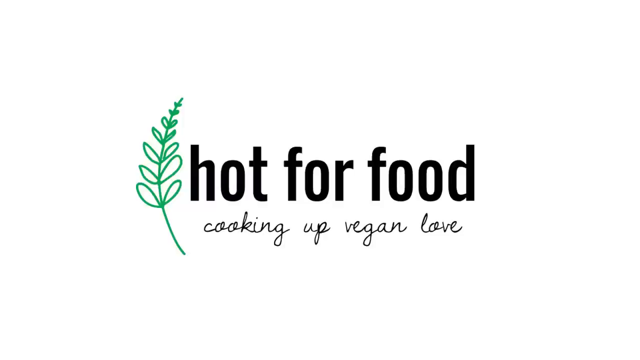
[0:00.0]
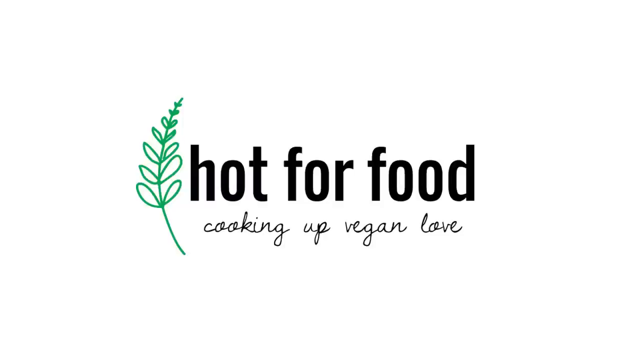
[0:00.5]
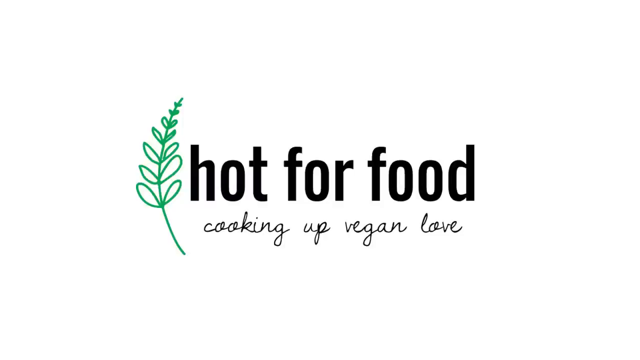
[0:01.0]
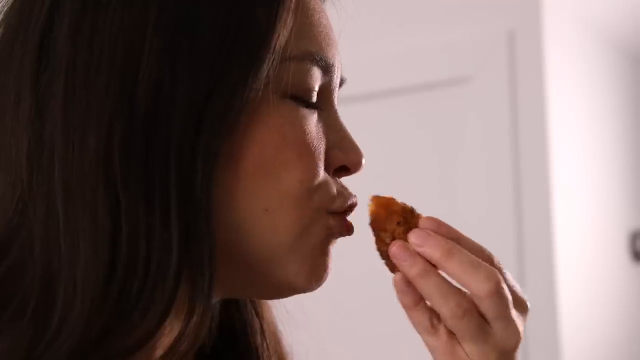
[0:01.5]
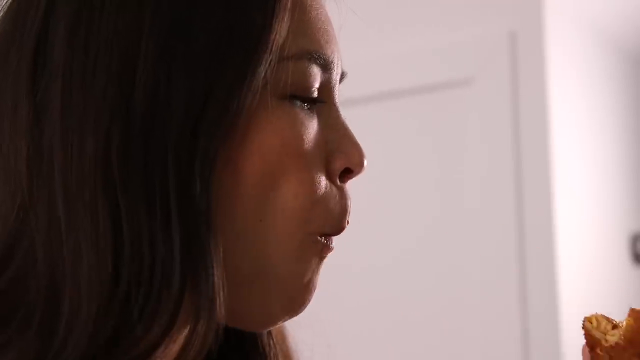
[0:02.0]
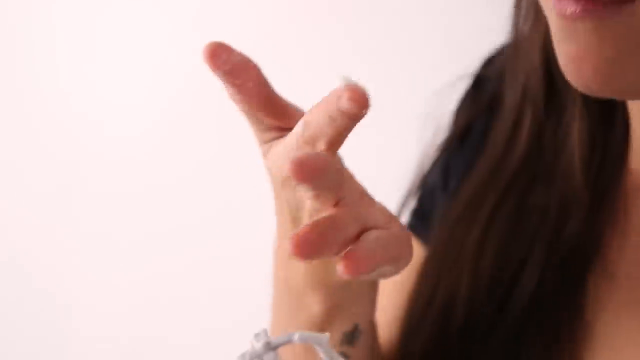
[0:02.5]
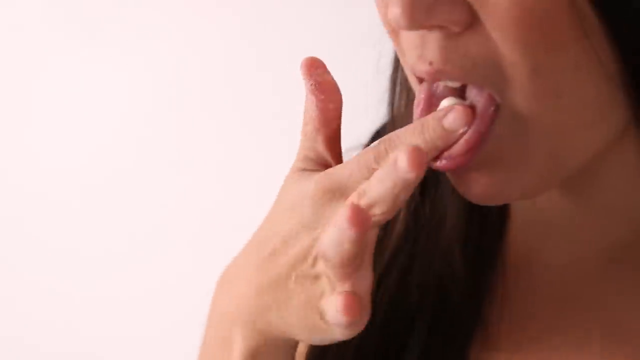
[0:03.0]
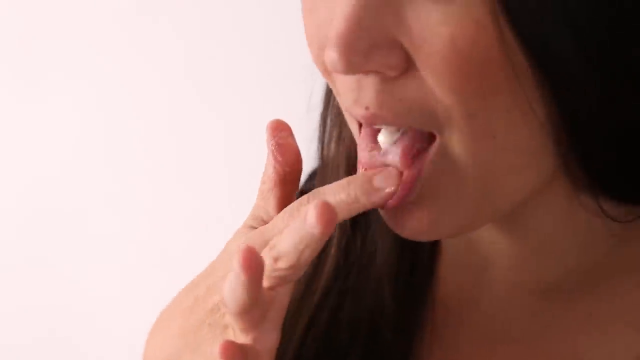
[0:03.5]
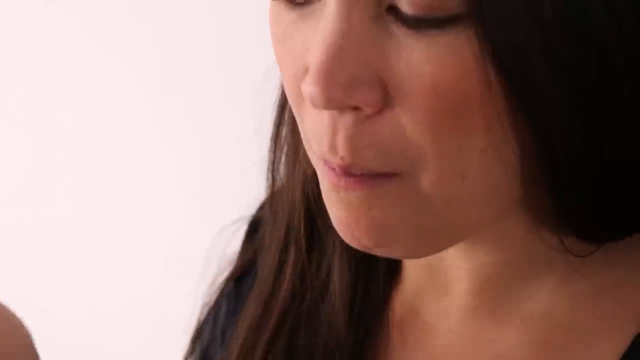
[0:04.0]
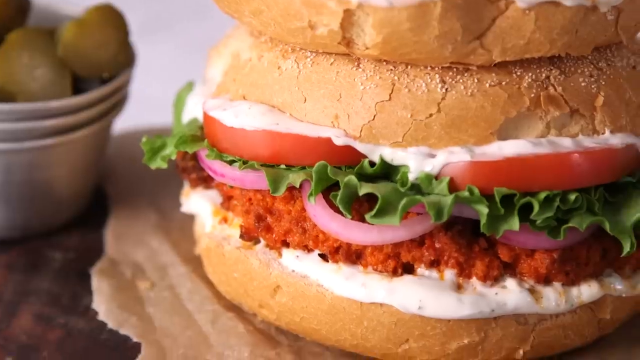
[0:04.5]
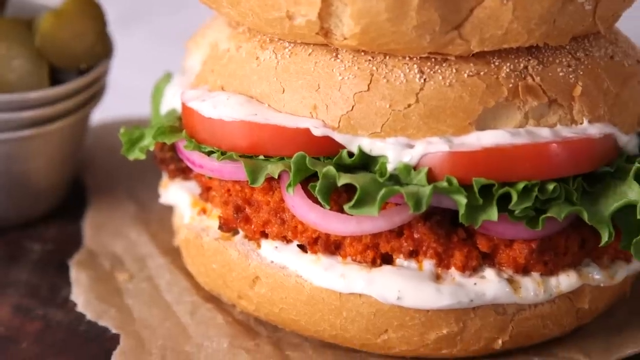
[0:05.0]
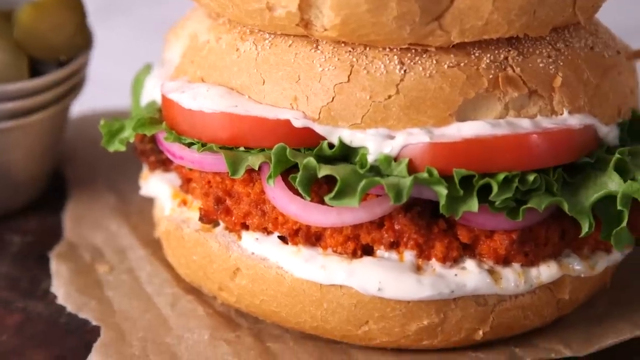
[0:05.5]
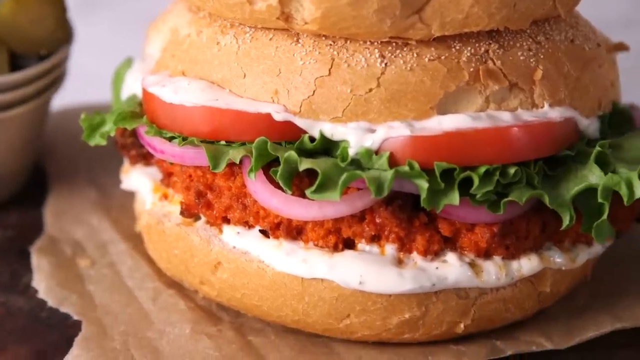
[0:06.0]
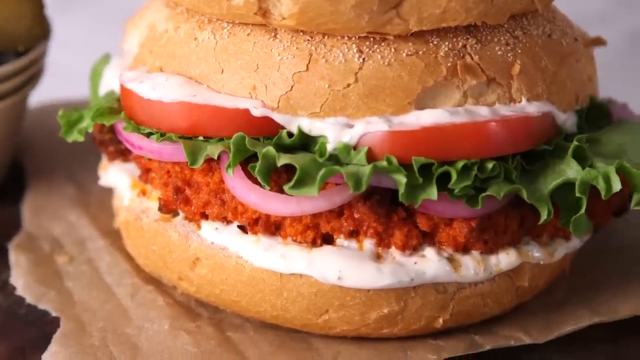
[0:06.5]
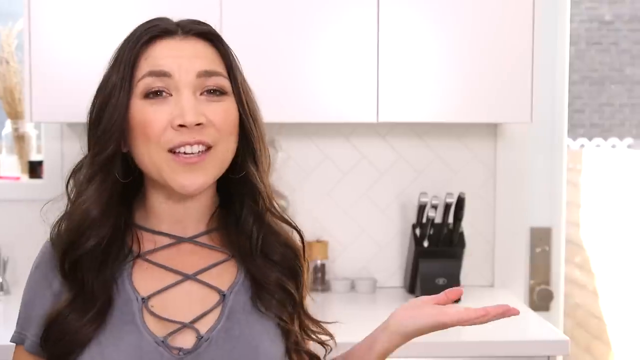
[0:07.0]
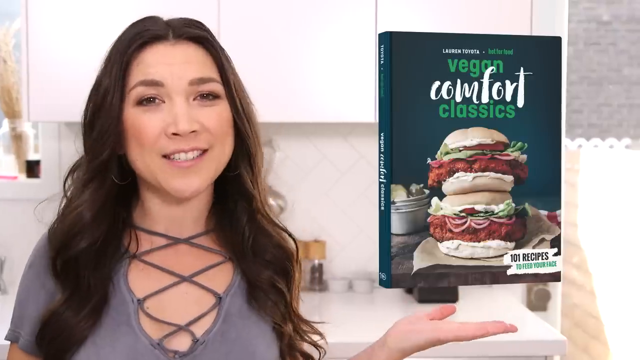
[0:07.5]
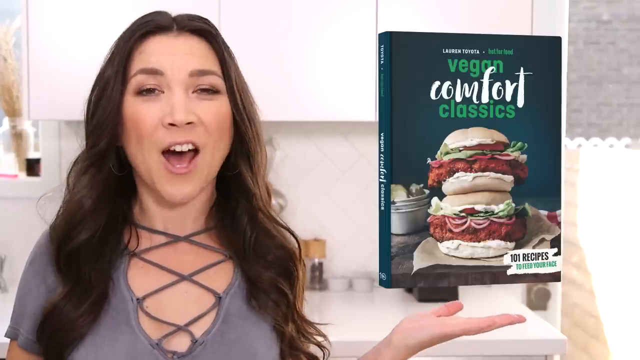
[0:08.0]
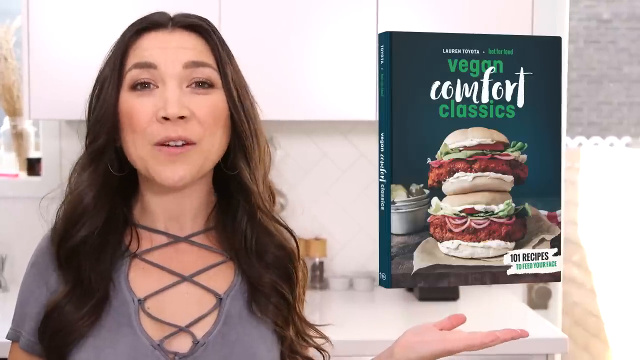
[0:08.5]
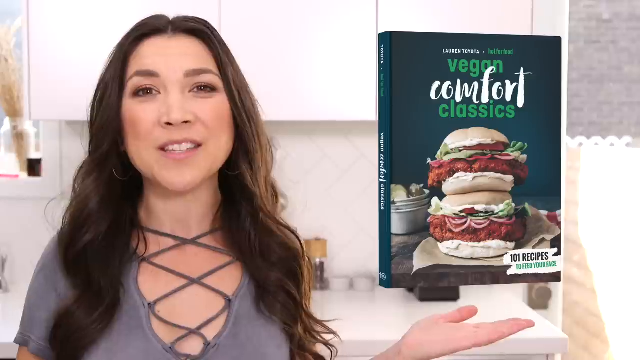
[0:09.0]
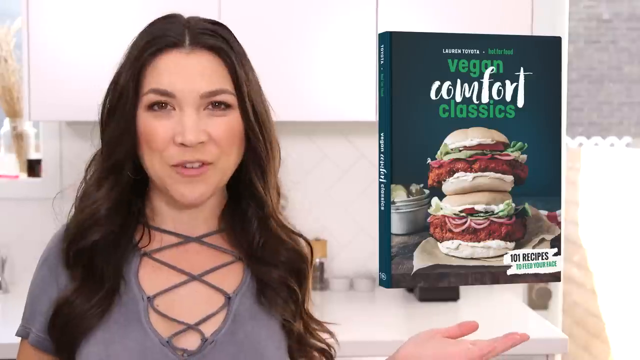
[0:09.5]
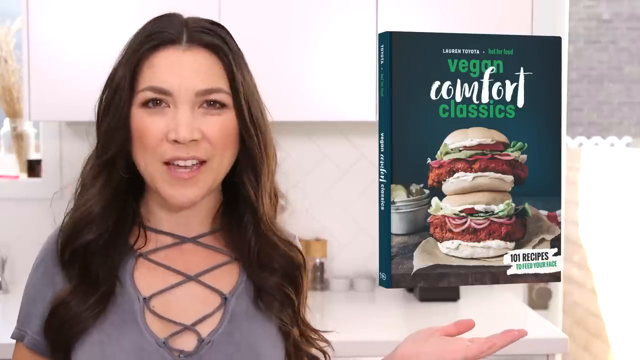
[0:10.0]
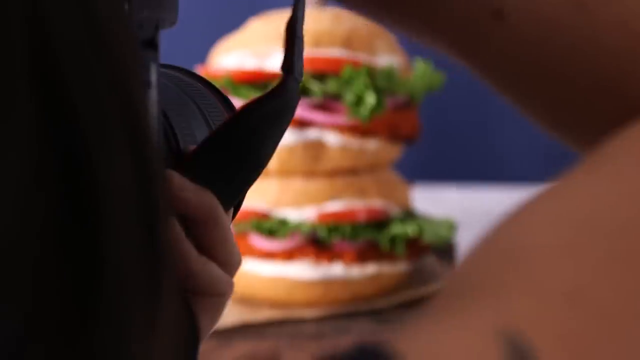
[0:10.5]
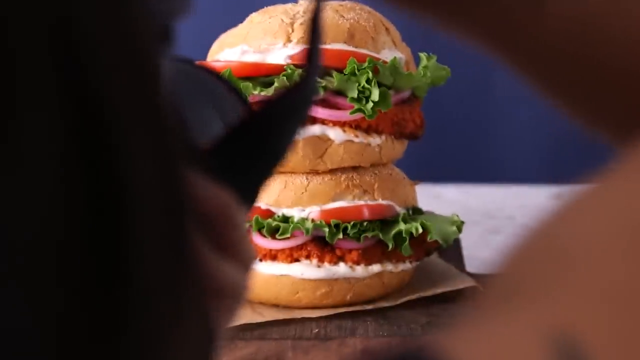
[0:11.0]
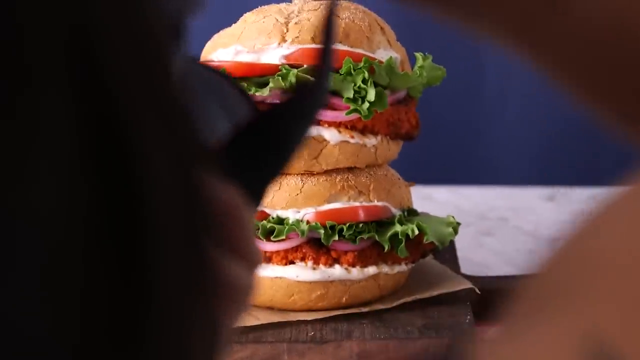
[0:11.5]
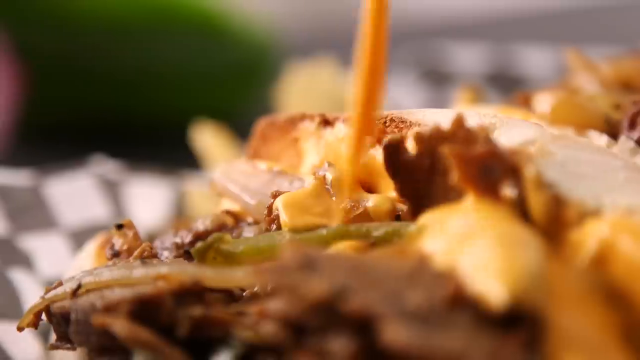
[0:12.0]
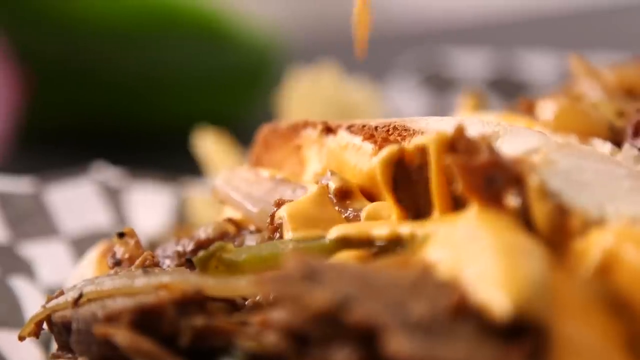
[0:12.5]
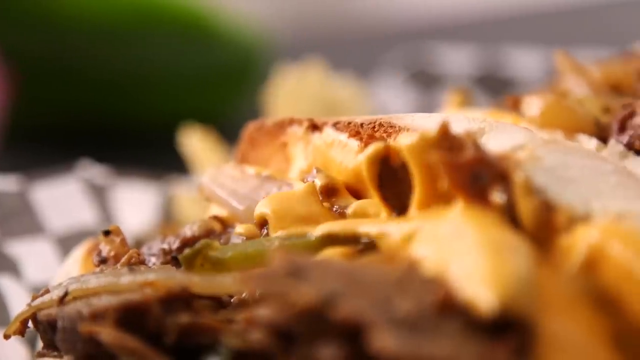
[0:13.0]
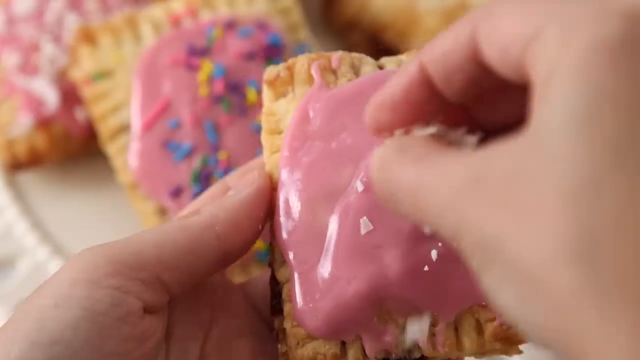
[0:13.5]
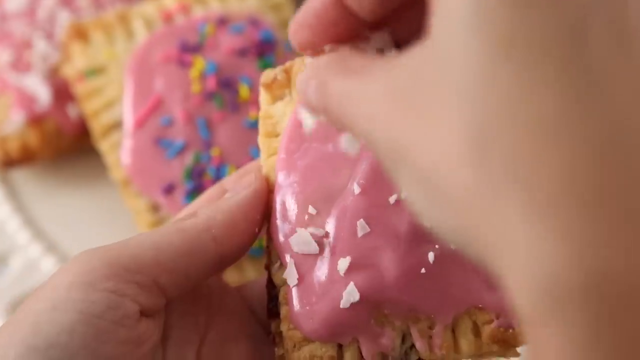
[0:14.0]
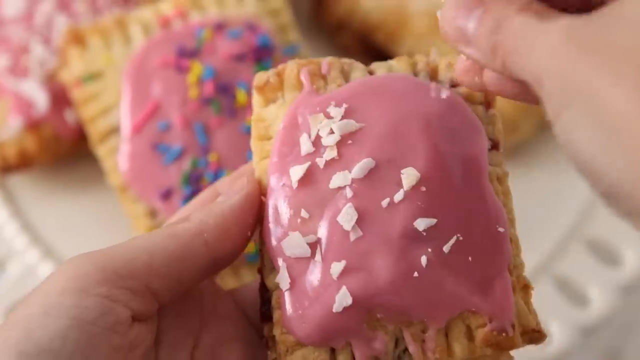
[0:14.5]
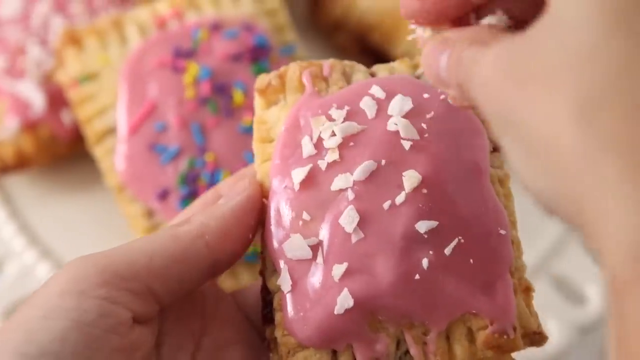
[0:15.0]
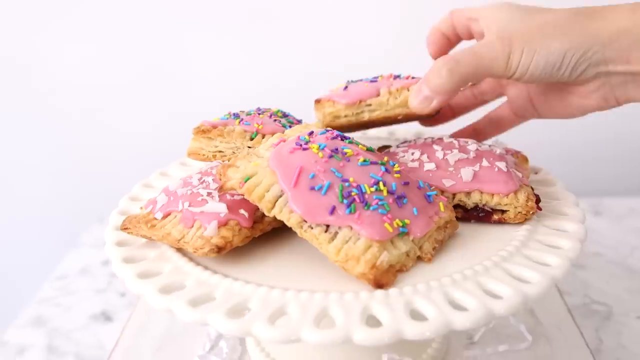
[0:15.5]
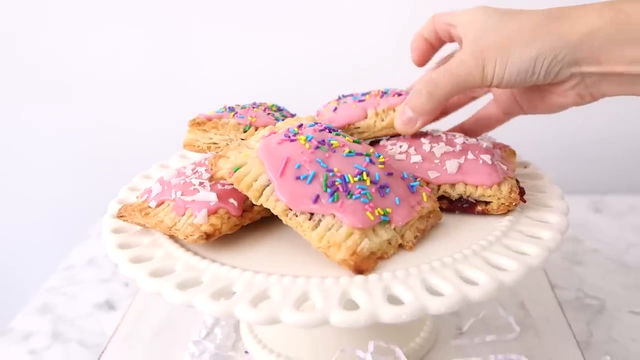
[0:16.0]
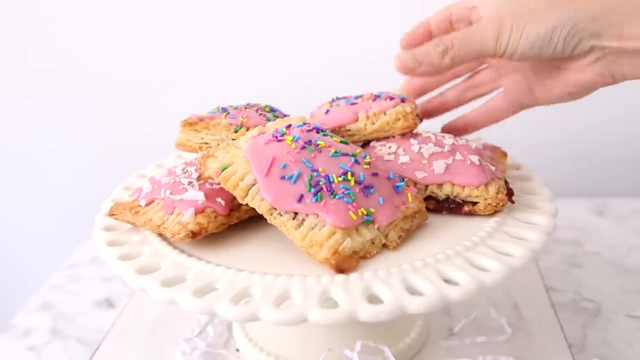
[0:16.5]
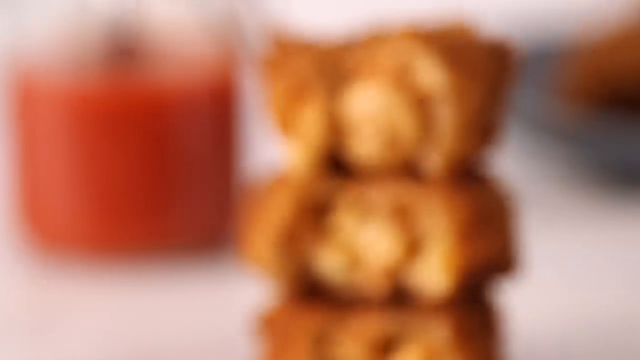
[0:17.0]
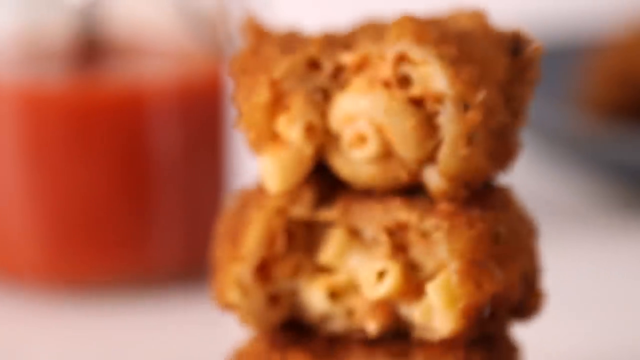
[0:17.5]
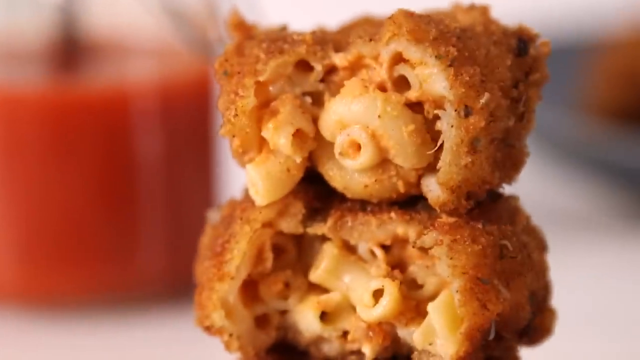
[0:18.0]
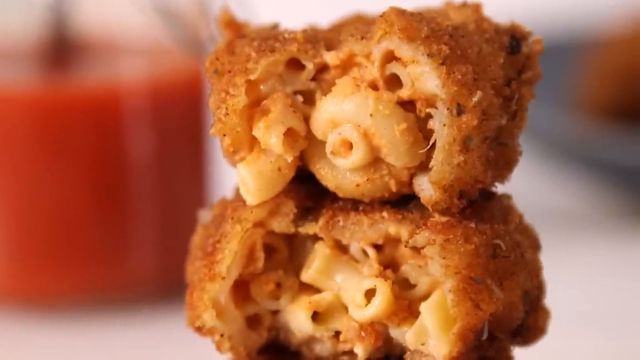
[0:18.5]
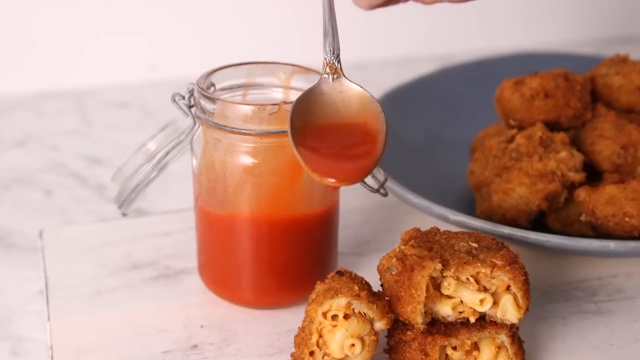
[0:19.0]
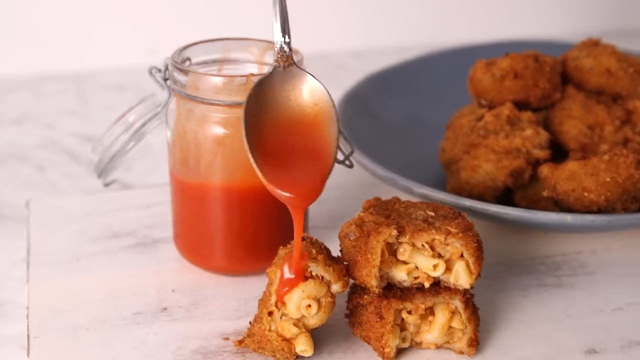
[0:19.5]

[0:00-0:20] The words "cooking up vegan love" and "hot for food" appear. A woman bites into food, chews it and licks her fingers. A very sloppy-looking sandwich has a great deal of sauce on it. A cookbook, Vegan Comfort Classics, is shown, though it is difficult to tell what the front cover says. She has made some cute little pastries, and her products are shown, including what look like little fried macaroni and cheese bites drizzled with quite a lot of red sauce, possibly marinara or maybe a hot sauce. She appears to be showing the end products of a vegan cookbook. Some of the foods have a lovely texture, and the colors on the pastries are very vivid.